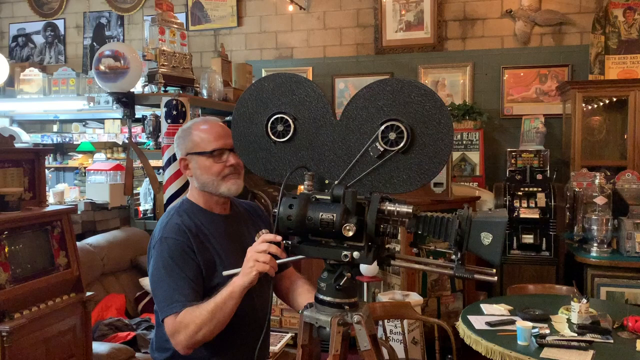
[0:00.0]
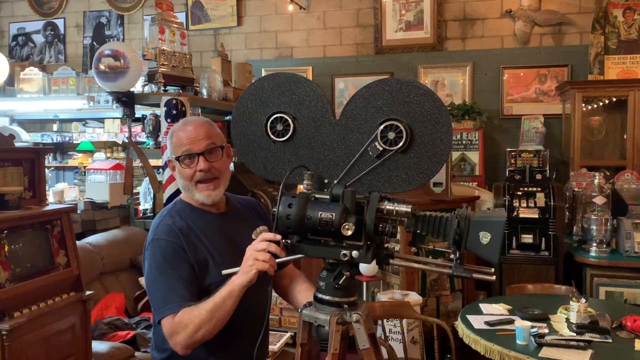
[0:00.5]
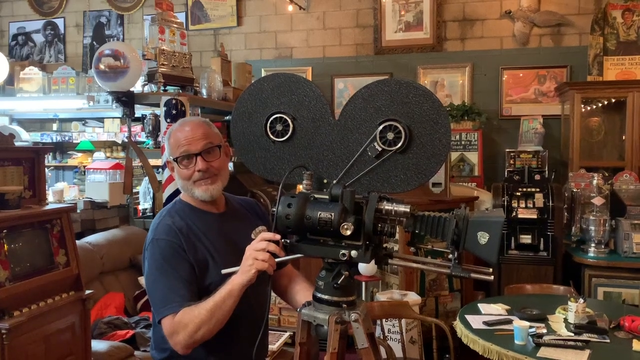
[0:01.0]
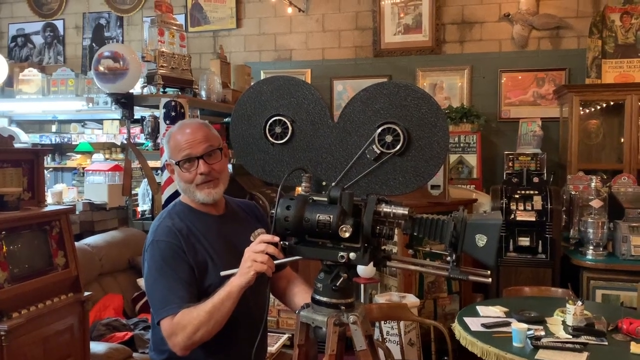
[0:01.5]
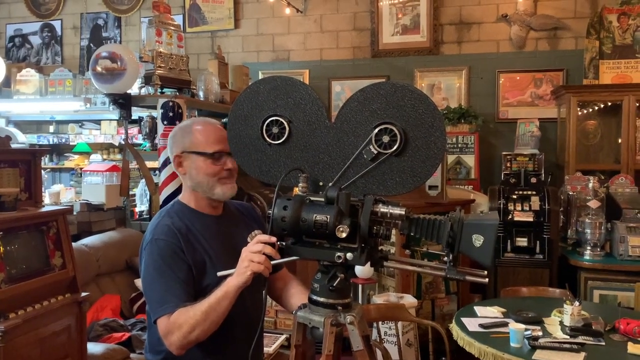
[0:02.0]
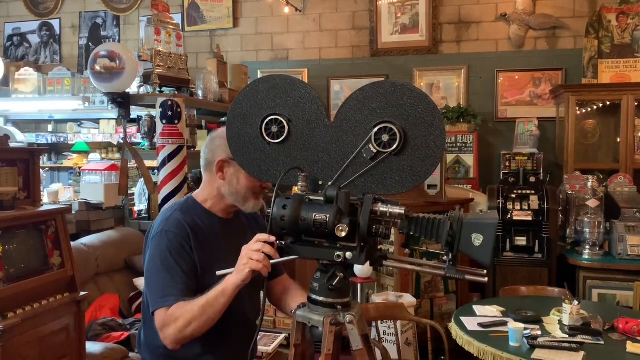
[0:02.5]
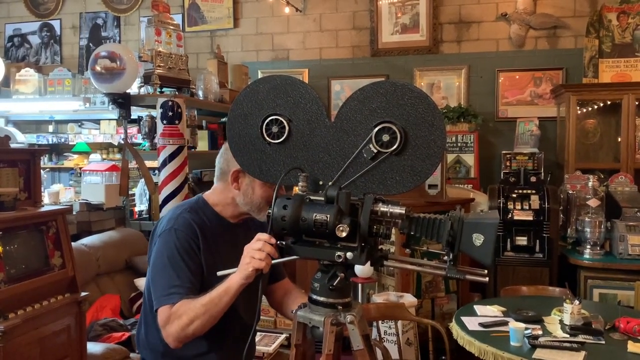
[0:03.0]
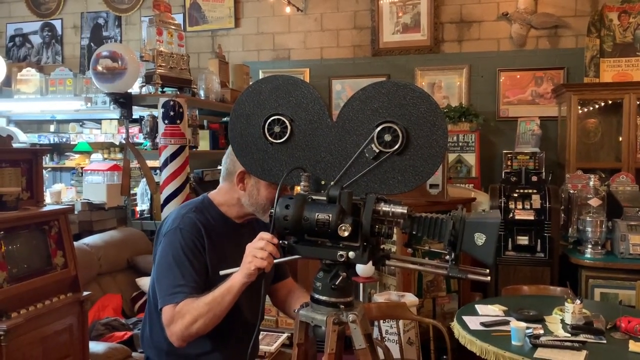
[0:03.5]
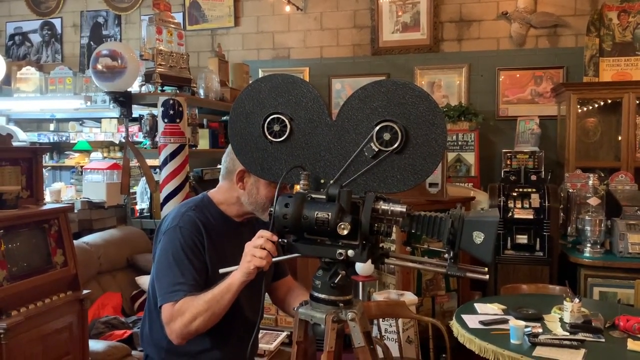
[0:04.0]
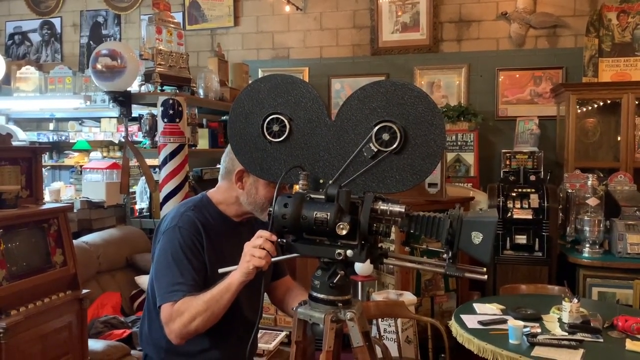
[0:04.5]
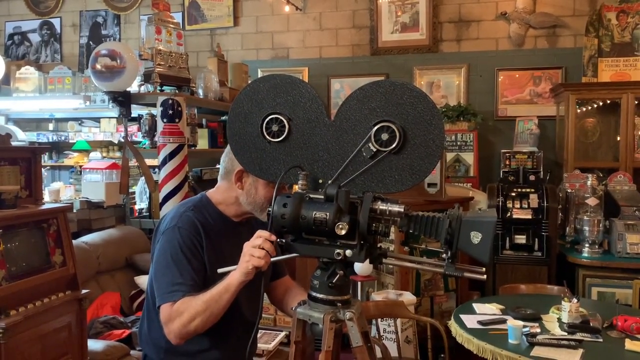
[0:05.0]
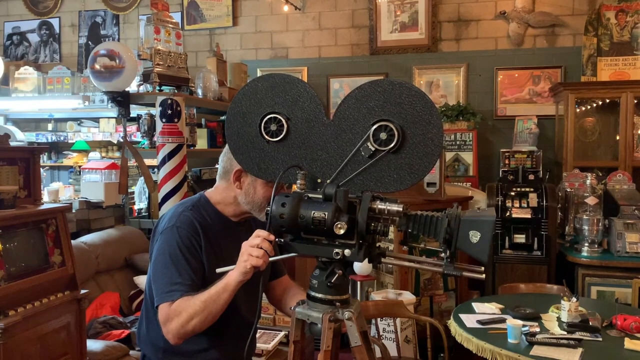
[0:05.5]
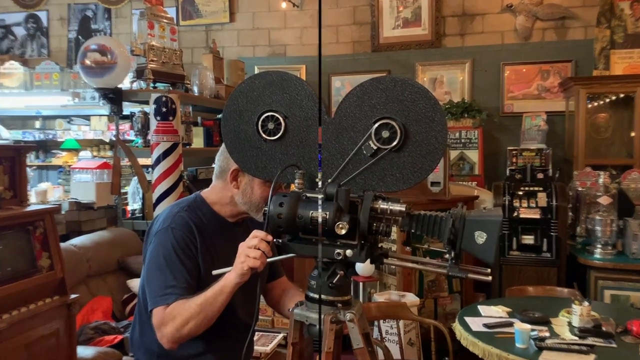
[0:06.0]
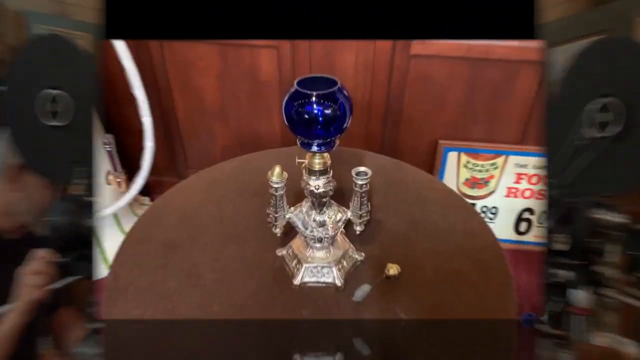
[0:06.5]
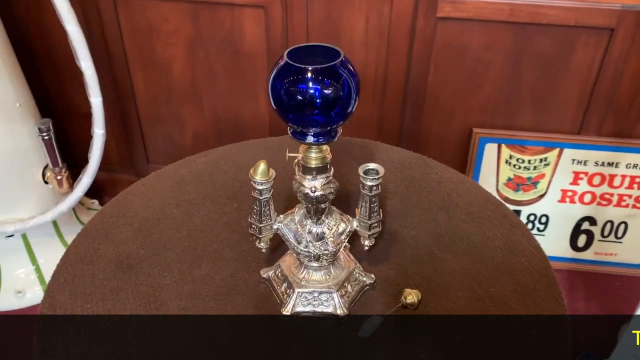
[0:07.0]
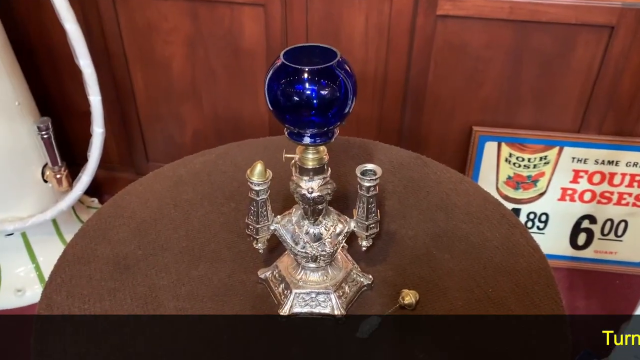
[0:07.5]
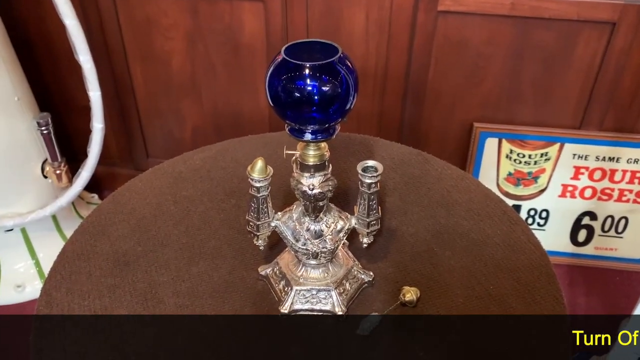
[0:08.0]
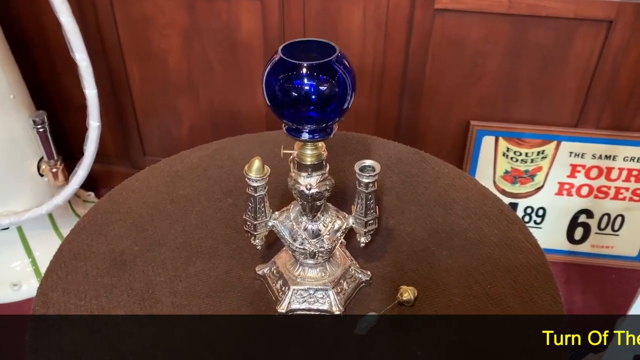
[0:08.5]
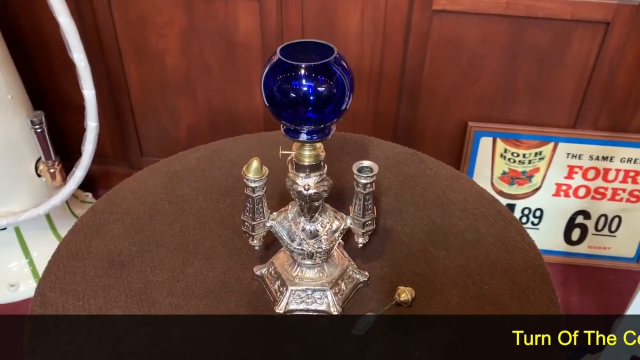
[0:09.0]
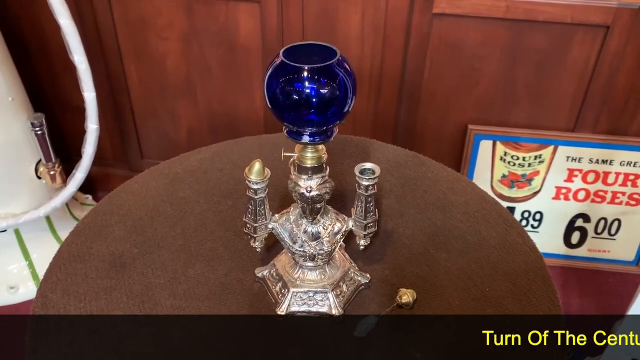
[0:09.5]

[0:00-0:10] The video opens in what appears to be some sort of antique shop, where a gentleman stands at an old-timey device that looks like a camera, video recorder or projector. He smiles at the camera and has his right hand on the device. The view then pans to what appears to be some sort of glass bulb on top of a metal structure, possibly a hookah base.